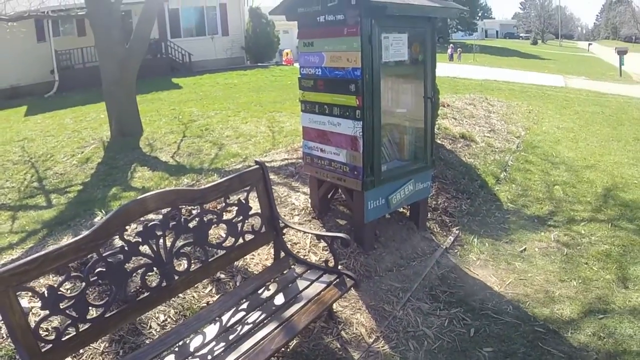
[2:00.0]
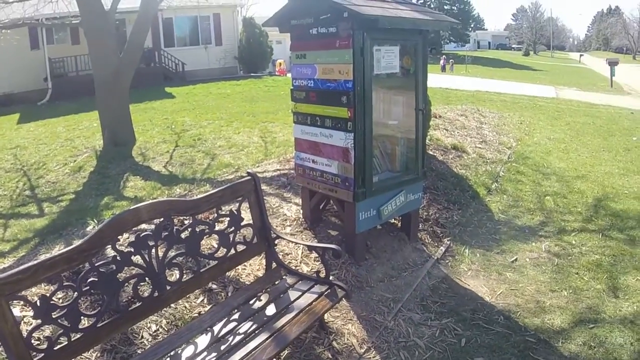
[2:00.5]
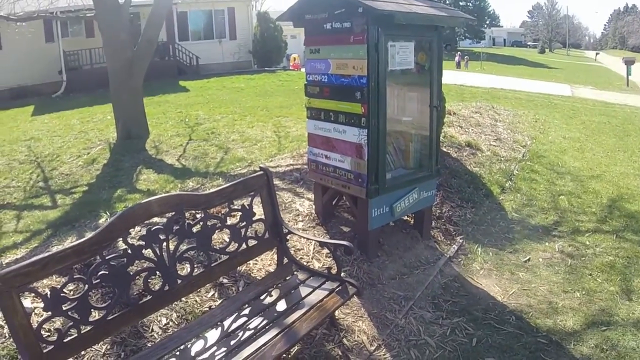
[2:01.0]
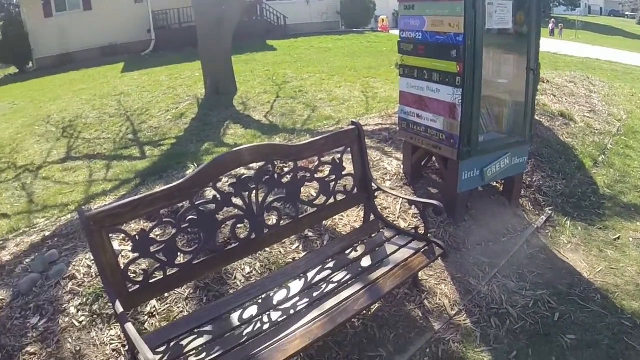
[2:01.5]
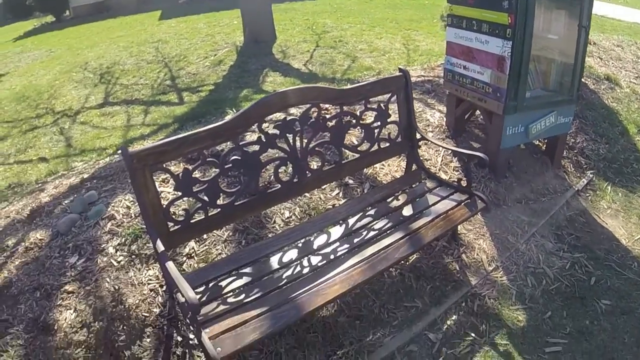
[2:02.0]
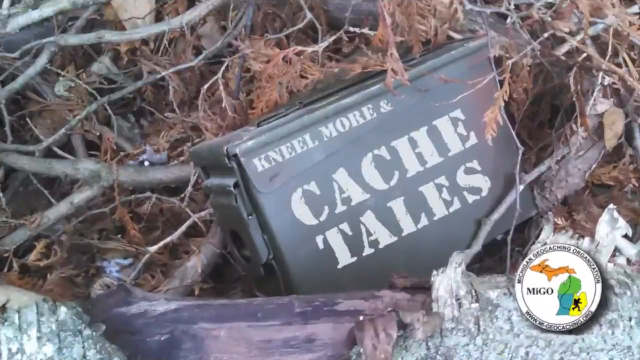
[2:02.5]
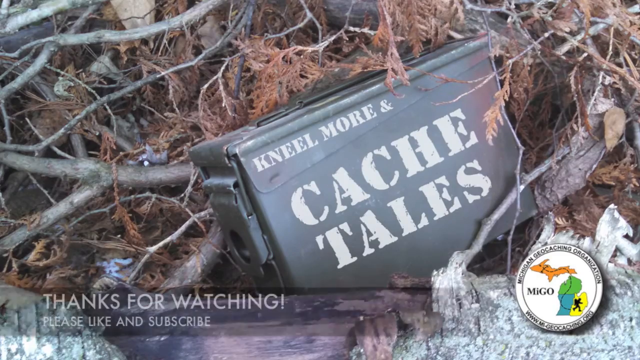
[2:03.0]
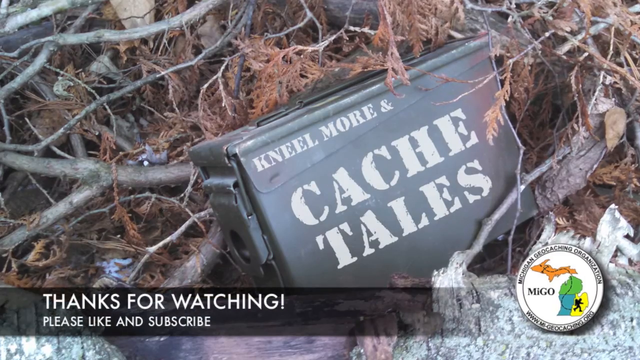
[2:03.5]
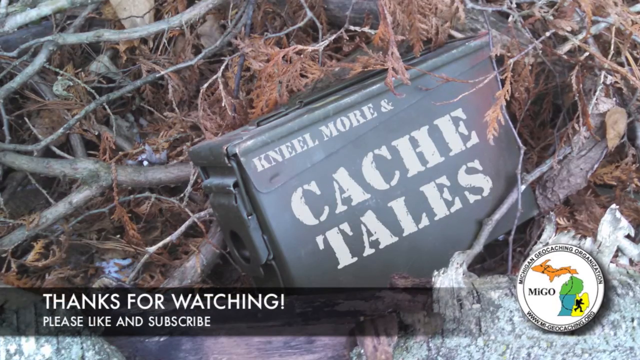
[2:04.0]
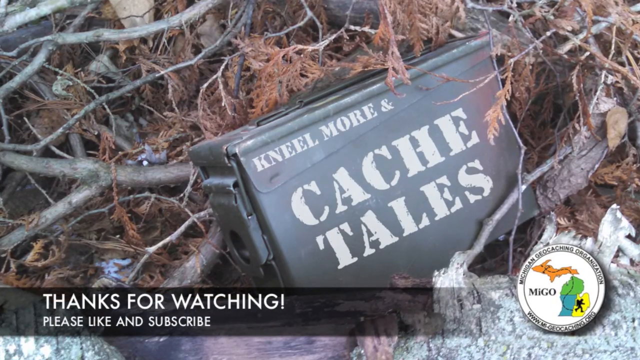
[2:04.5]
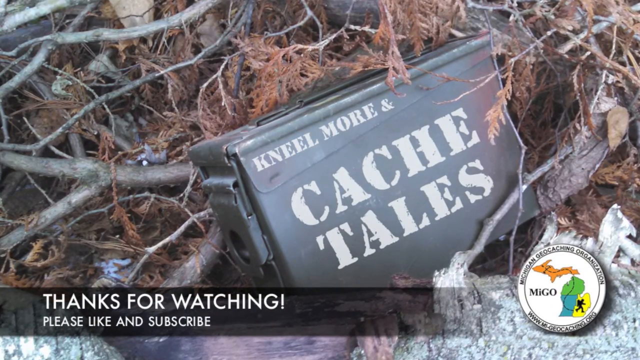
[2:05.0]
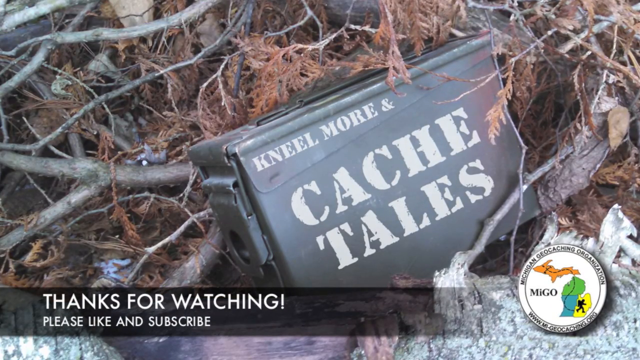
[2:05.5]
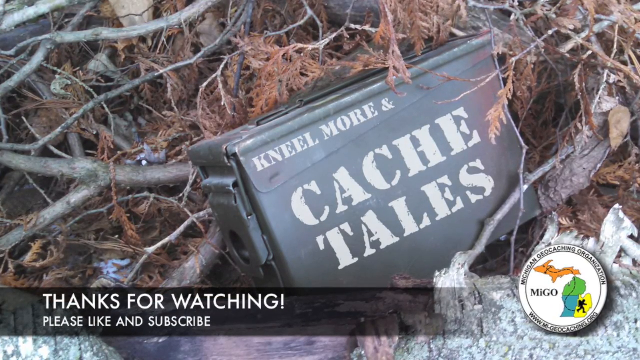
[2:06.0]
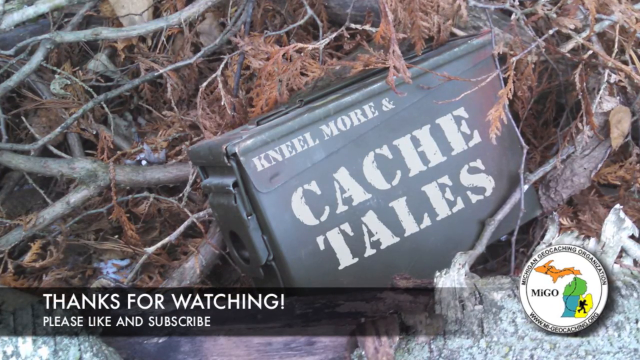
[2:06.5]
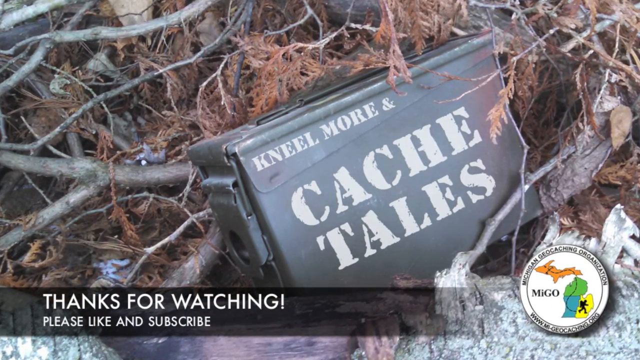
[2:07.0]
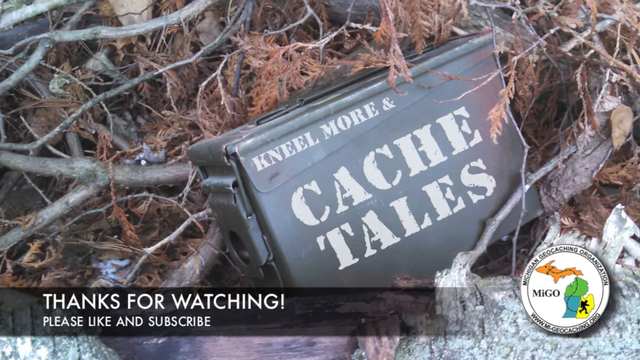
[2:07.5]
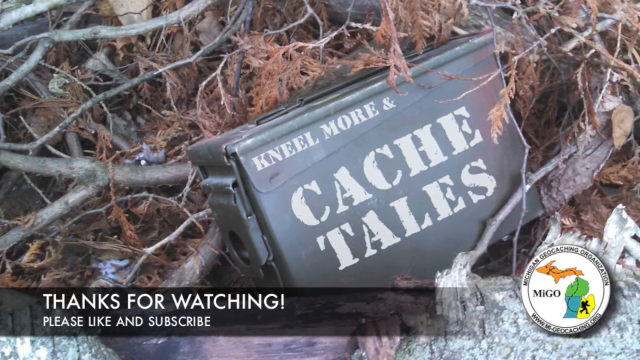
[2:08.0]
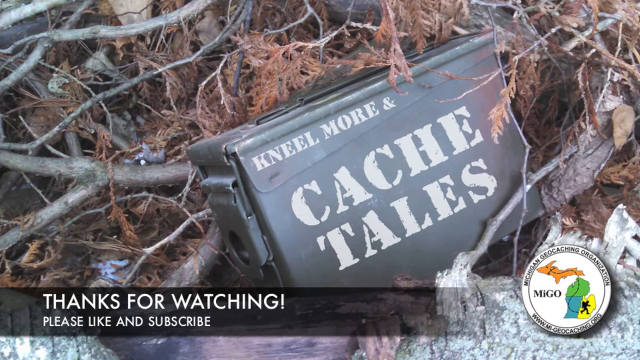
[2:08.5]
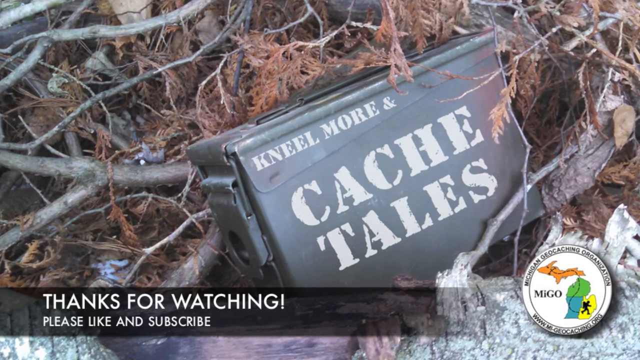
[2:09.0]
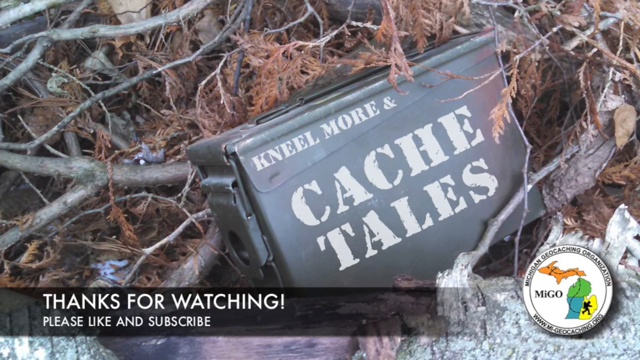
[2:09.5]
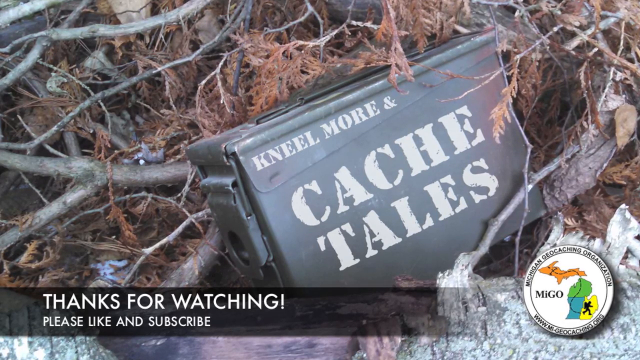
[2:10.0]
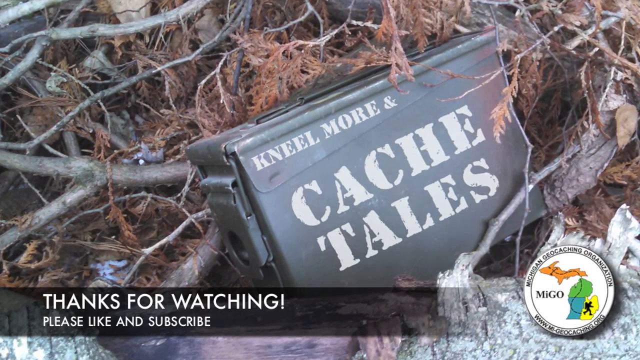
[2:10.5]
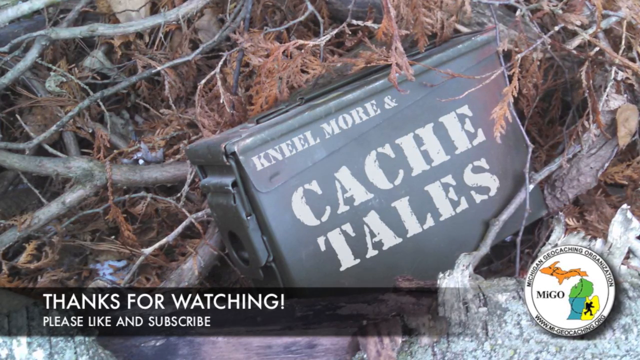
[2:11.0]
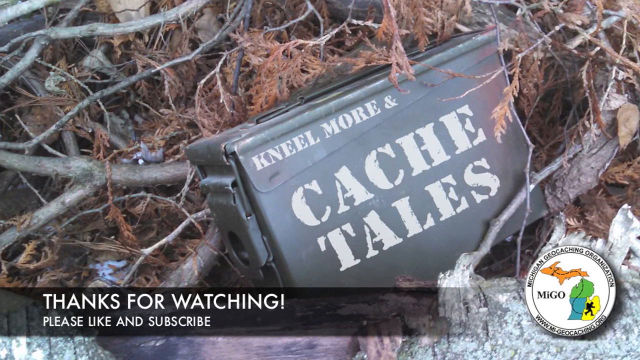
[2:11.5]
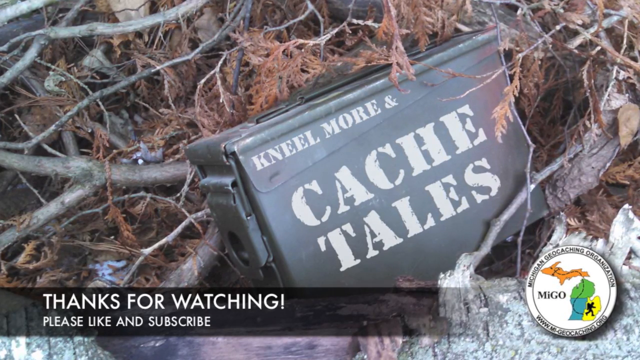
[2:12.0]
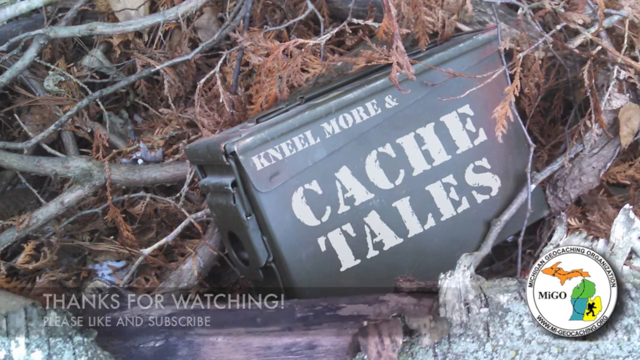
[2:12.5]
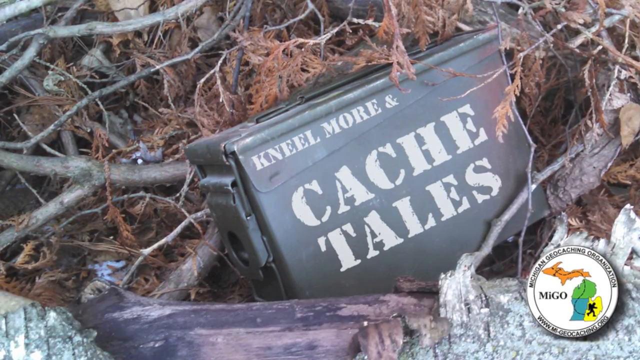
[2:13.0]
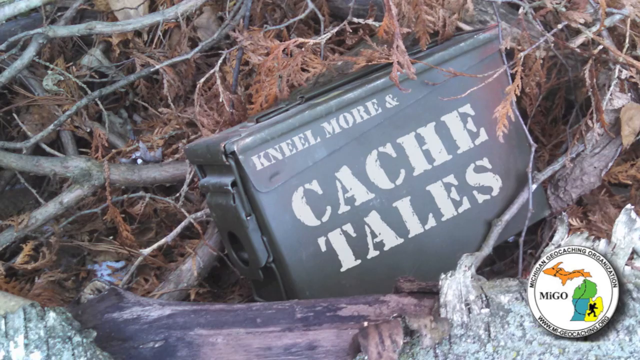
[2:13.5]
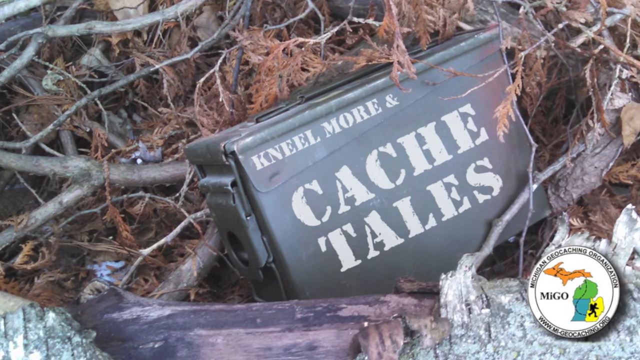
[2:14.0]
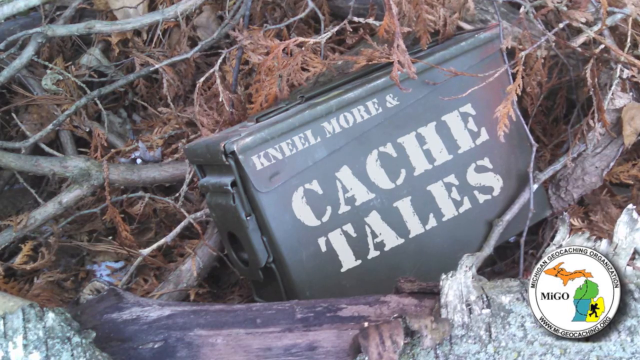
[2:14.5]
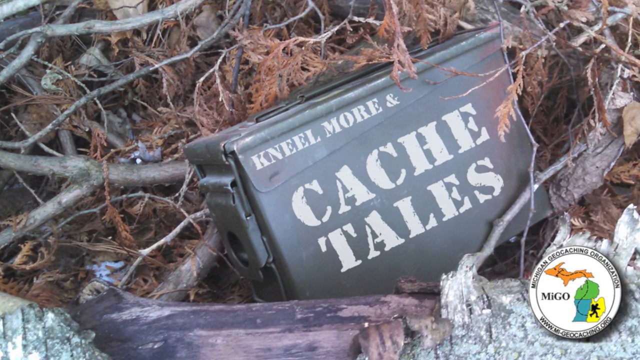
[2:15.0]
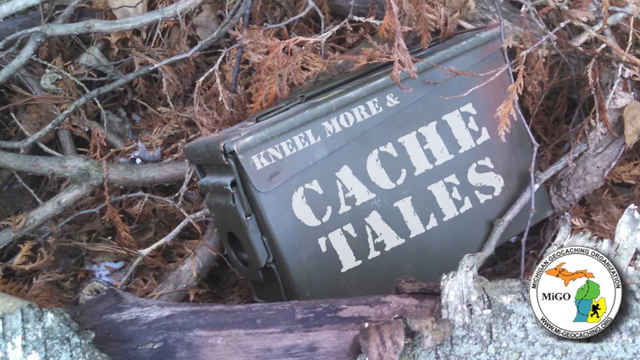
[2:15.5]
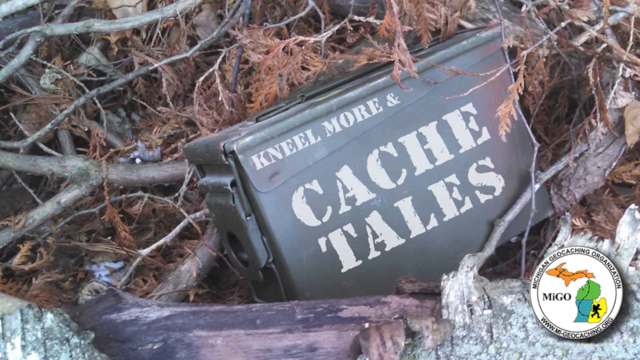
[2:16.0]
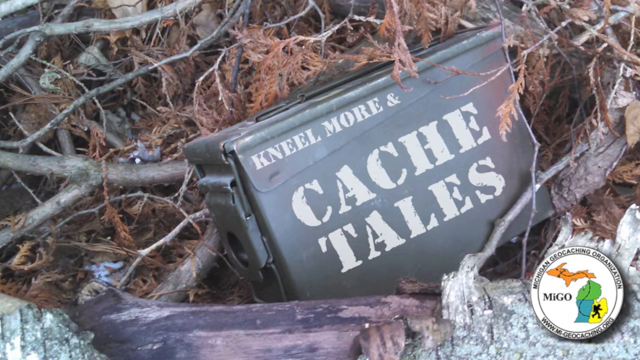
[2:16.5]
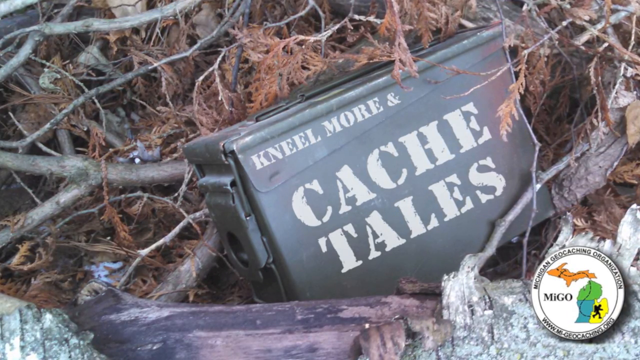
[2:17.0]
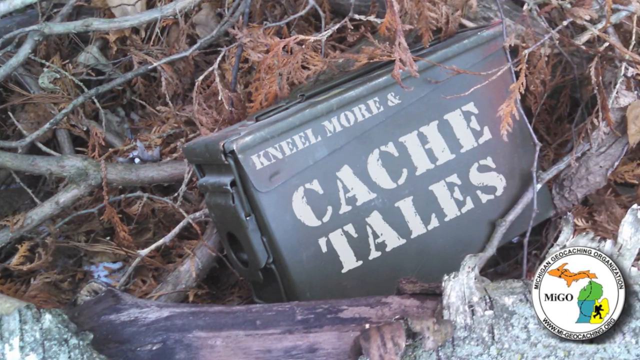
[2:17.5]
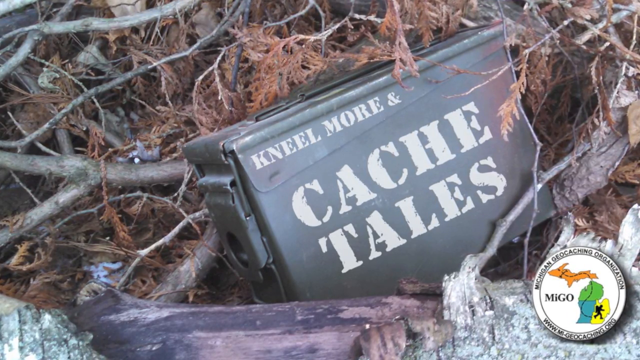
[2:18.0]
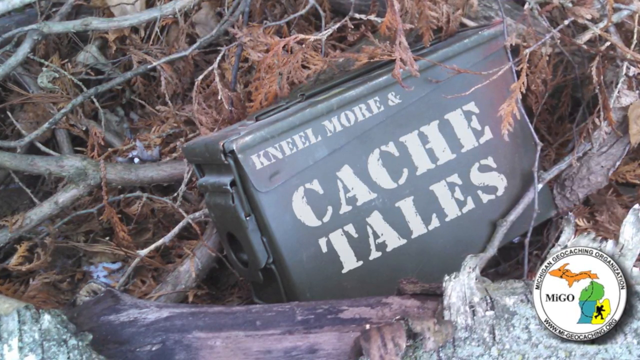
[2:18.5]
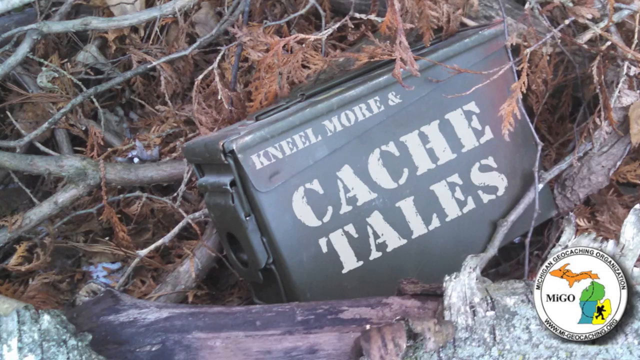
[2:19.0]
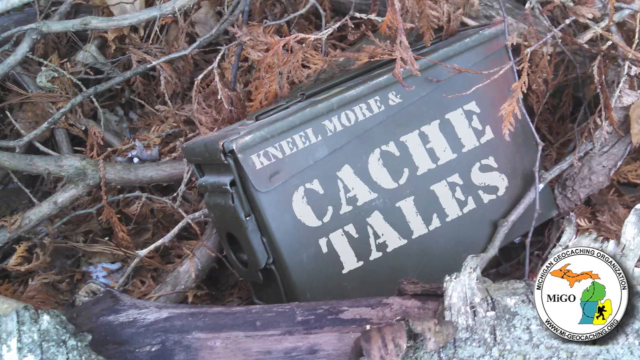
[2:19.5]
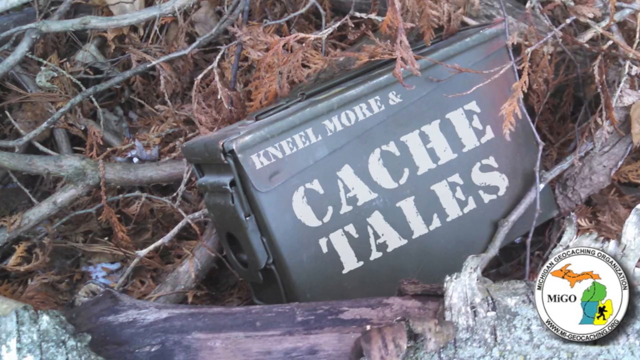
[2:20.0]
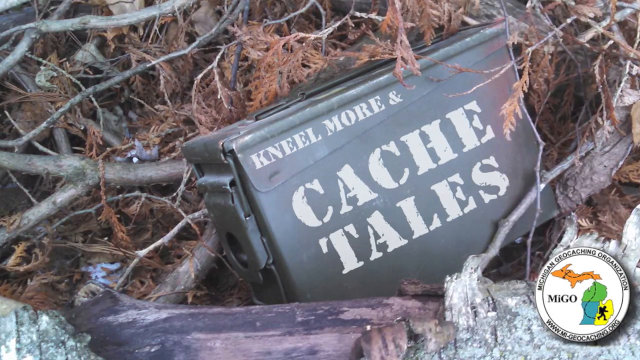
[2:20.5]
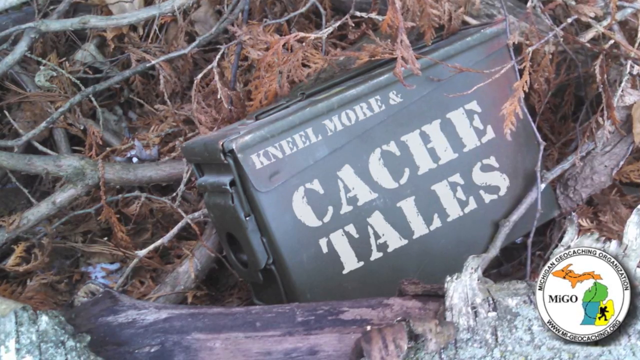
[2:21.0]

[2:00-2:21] The shot of the book nook with the bench next to it continues, then the video cuts quickly to the cache that looks like an ammo box. It is closed and appears to be in a nest of branches, twigs, some type of cedar or pine, and dried-out leaves. Then text says "thanks for watching. Please like and subscribe."